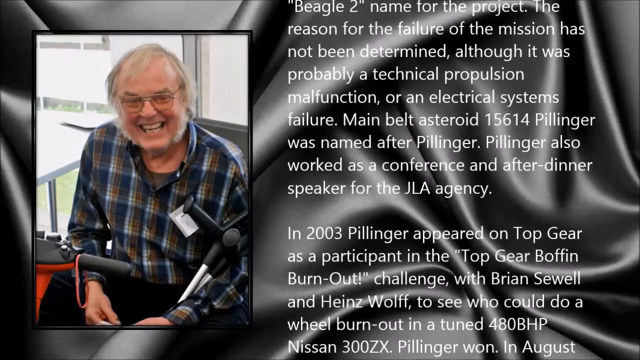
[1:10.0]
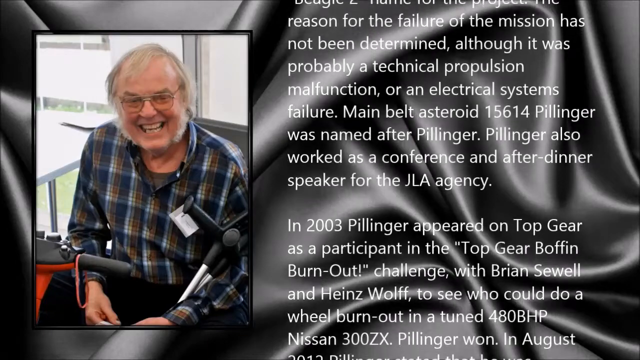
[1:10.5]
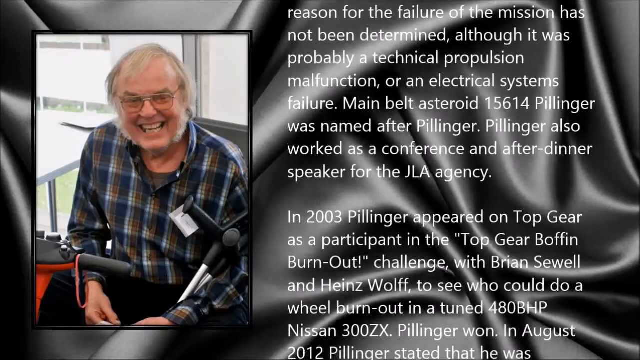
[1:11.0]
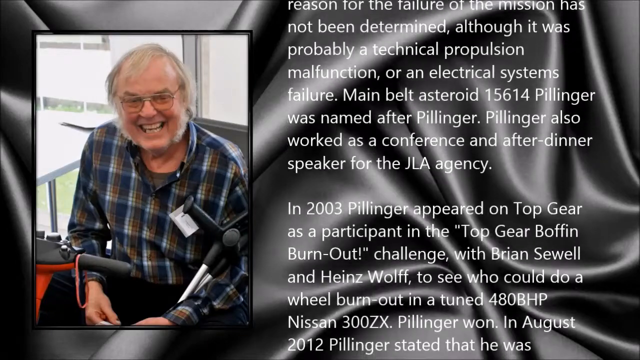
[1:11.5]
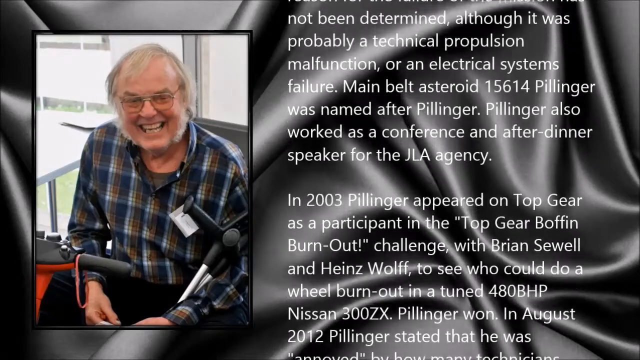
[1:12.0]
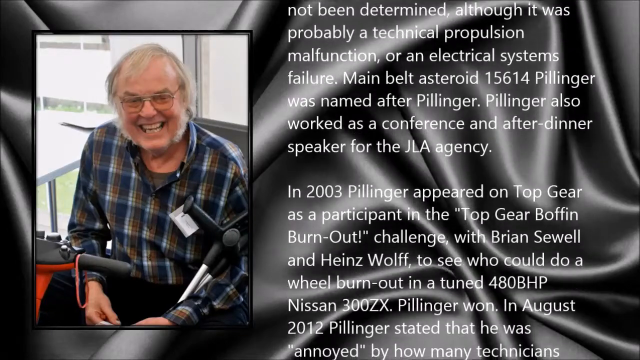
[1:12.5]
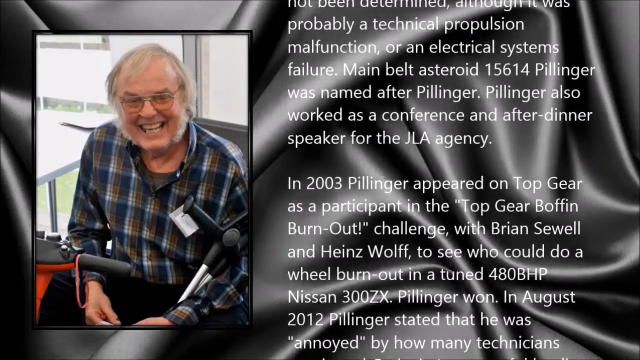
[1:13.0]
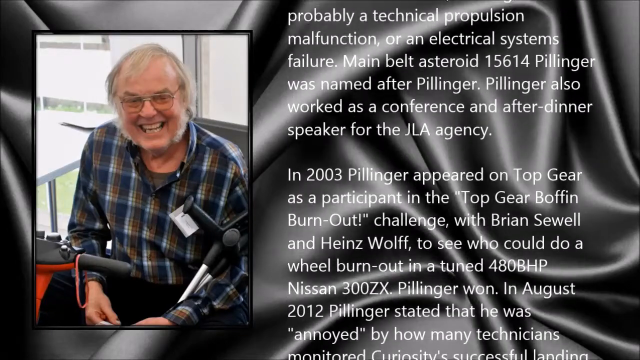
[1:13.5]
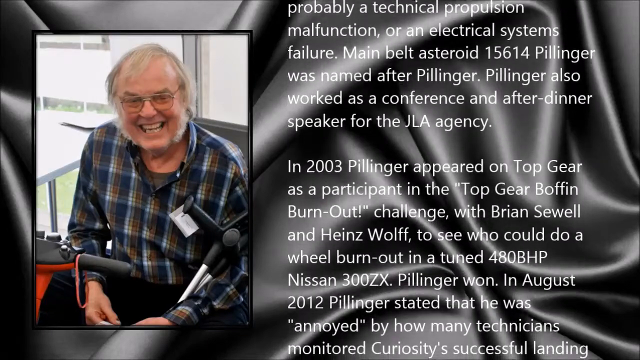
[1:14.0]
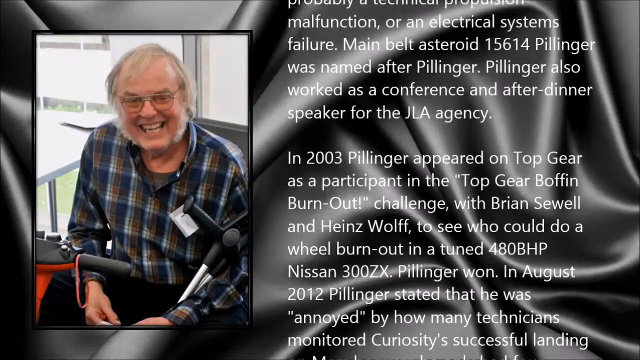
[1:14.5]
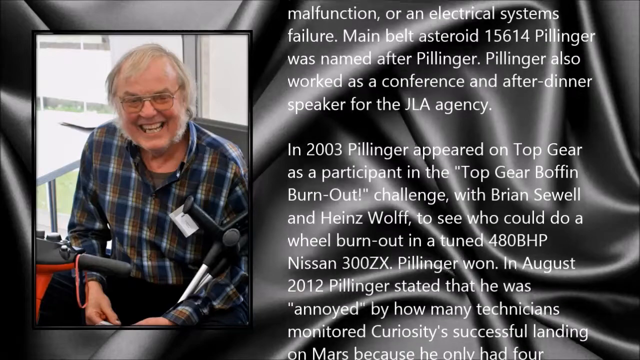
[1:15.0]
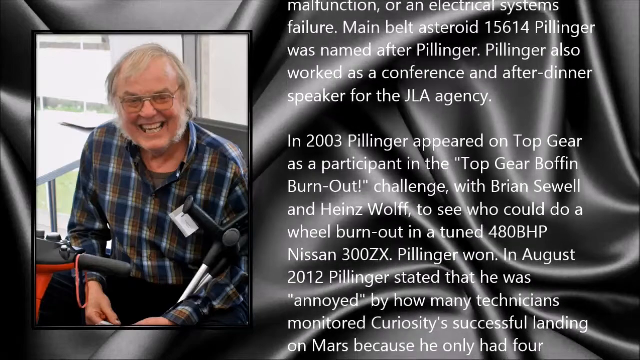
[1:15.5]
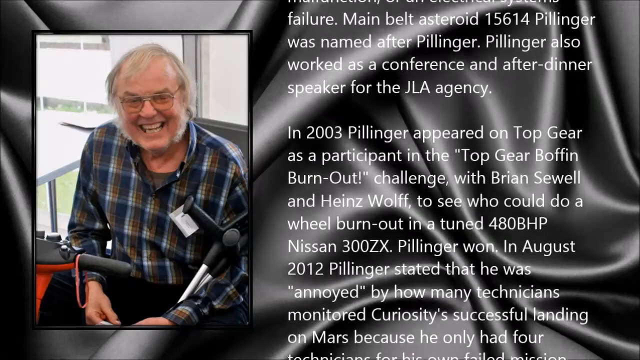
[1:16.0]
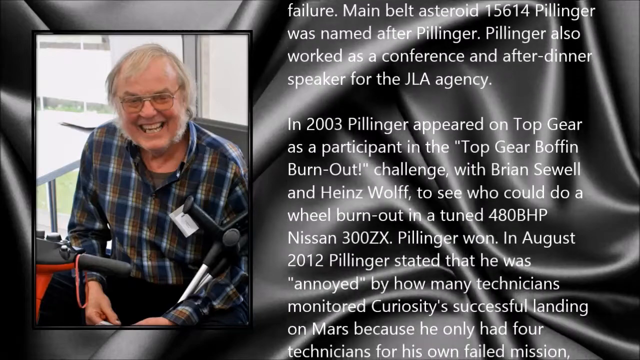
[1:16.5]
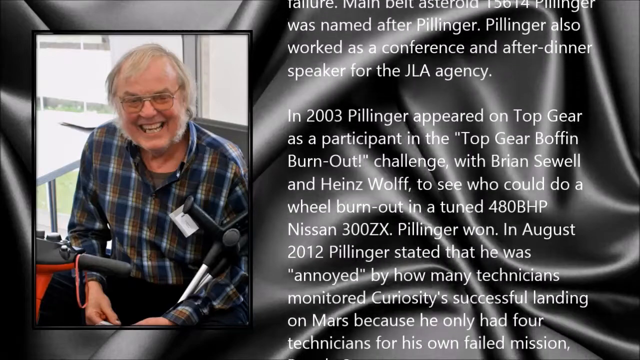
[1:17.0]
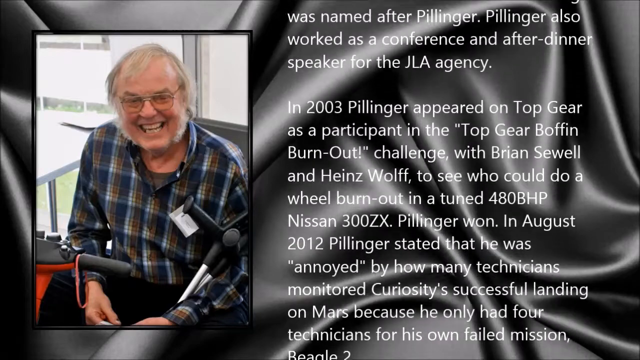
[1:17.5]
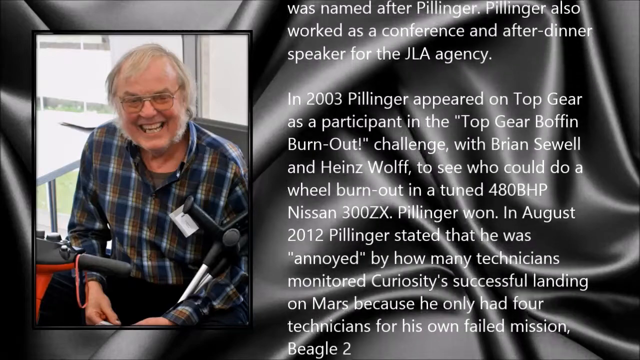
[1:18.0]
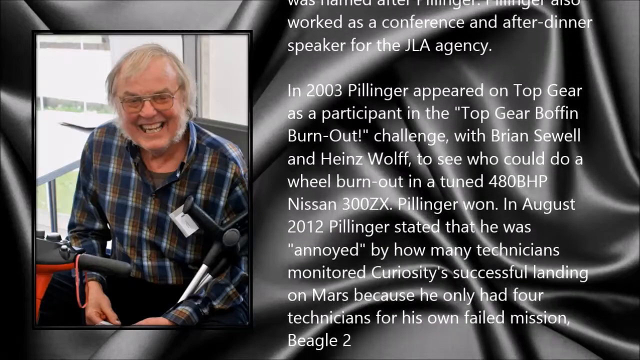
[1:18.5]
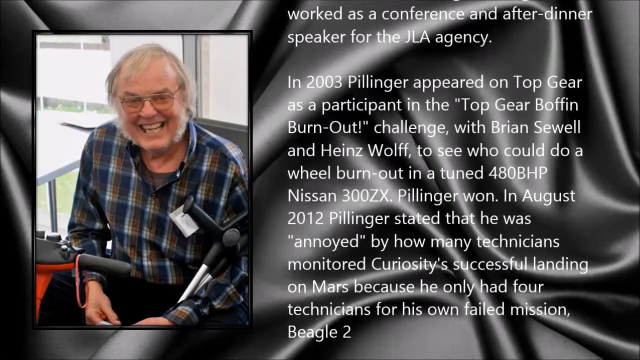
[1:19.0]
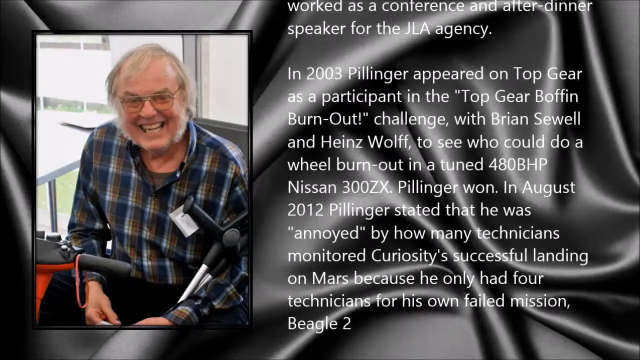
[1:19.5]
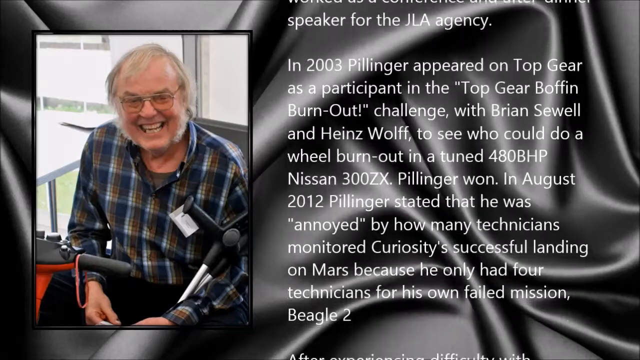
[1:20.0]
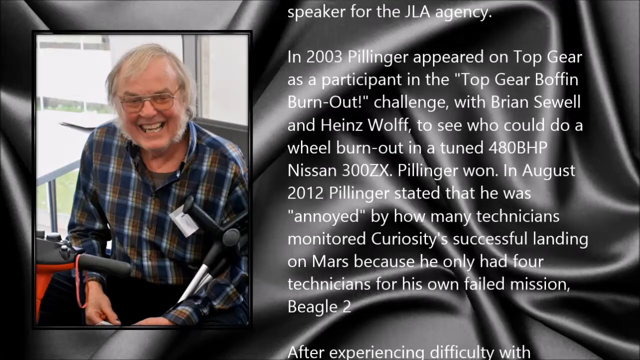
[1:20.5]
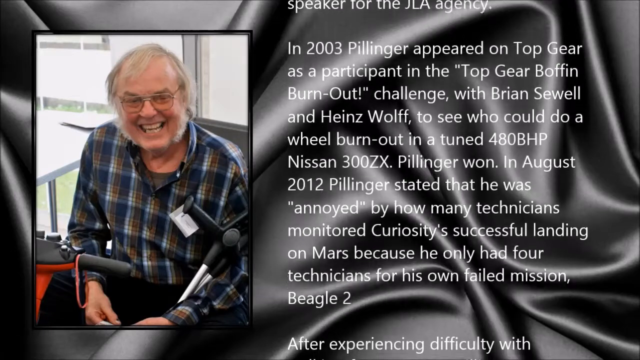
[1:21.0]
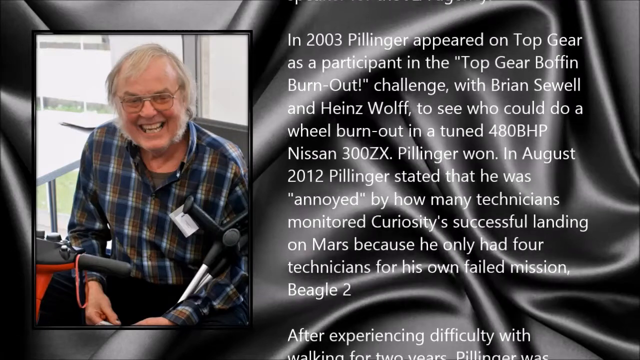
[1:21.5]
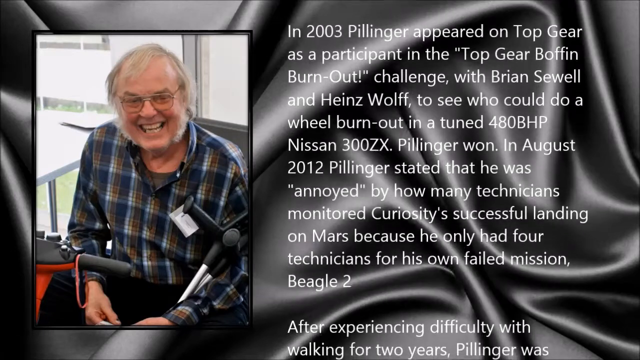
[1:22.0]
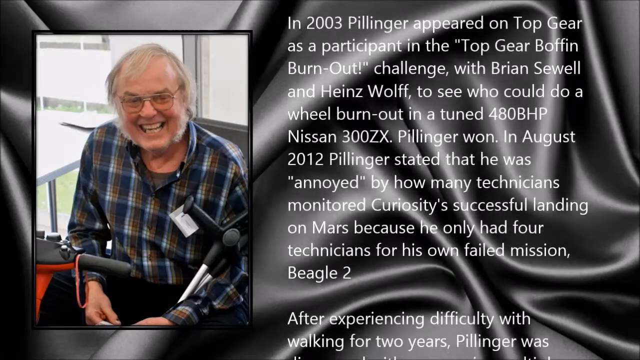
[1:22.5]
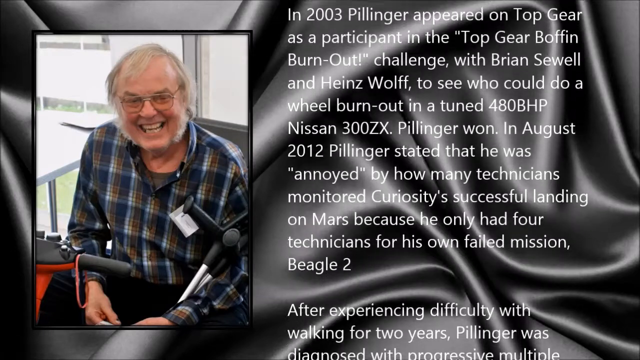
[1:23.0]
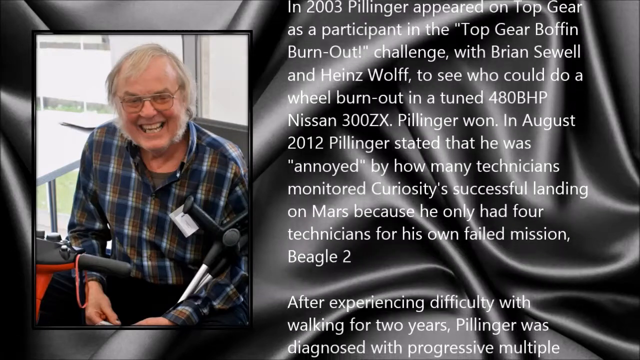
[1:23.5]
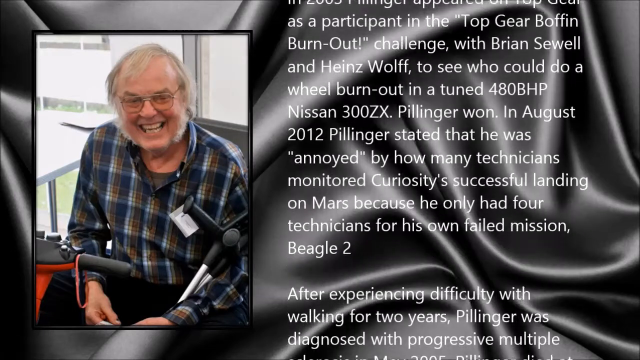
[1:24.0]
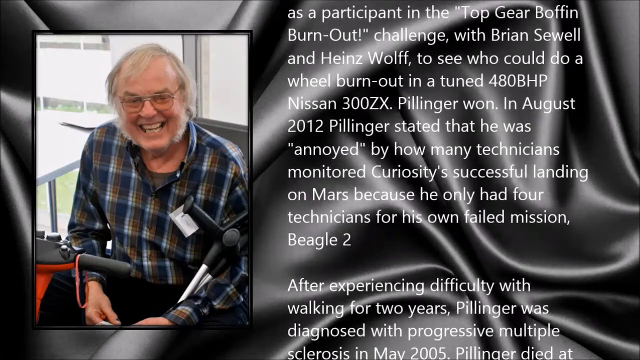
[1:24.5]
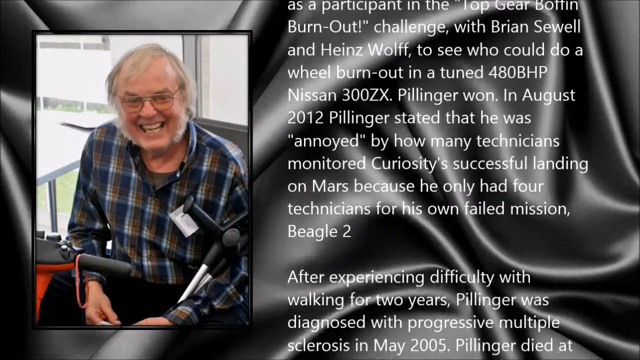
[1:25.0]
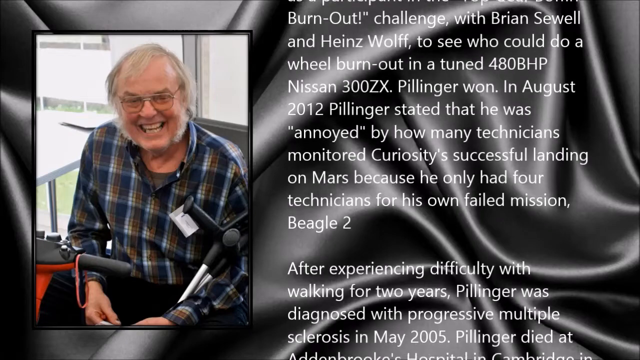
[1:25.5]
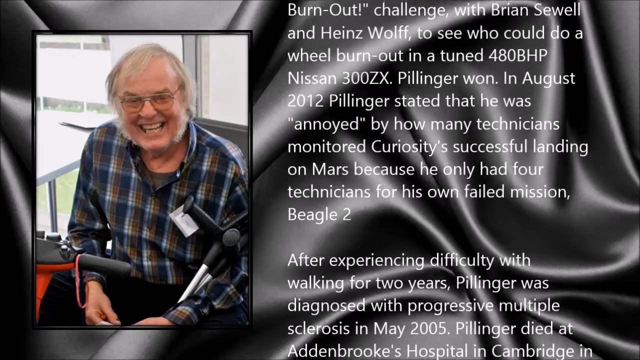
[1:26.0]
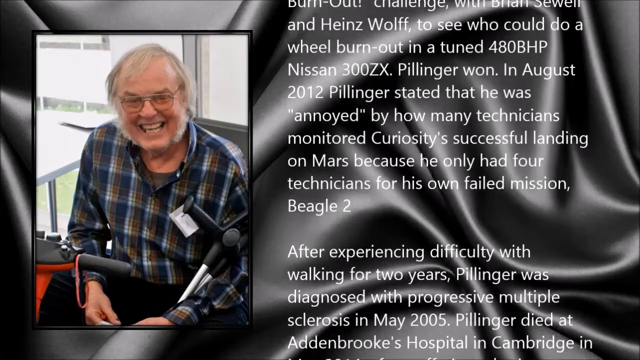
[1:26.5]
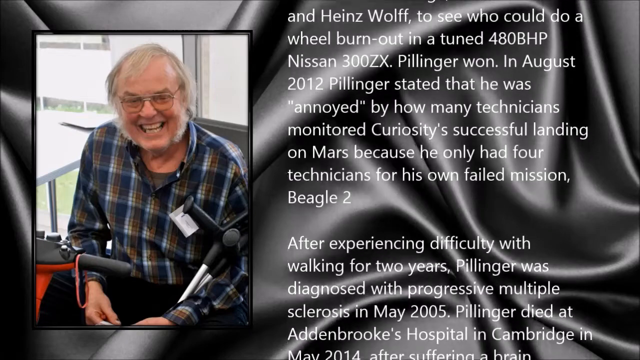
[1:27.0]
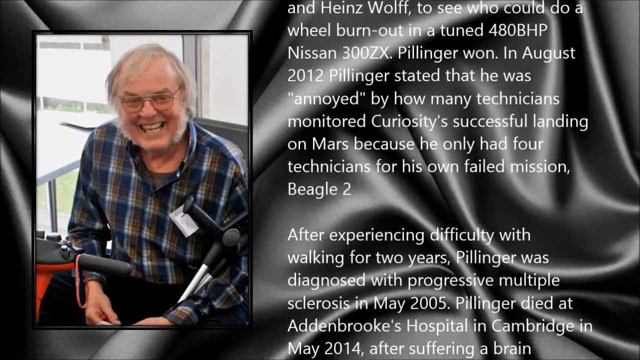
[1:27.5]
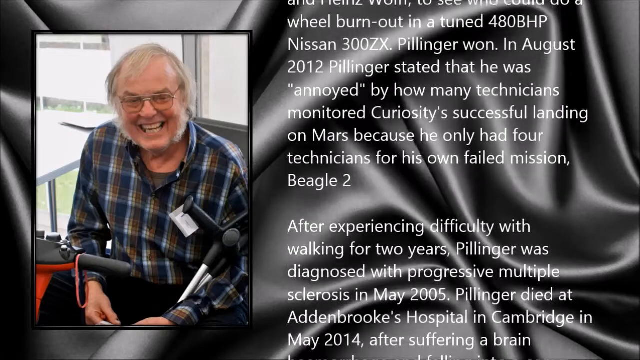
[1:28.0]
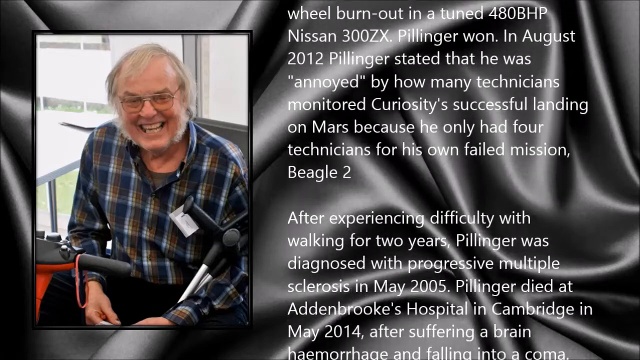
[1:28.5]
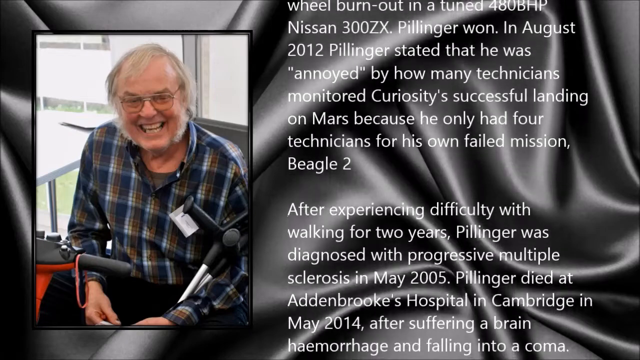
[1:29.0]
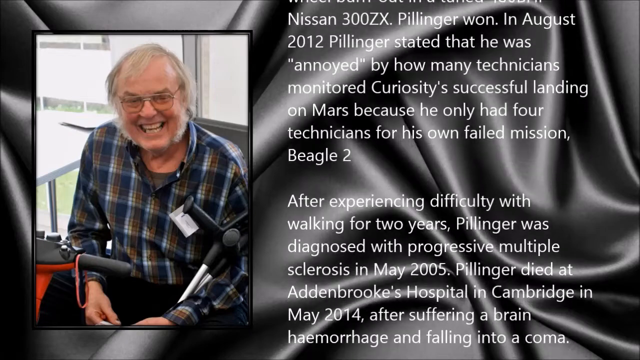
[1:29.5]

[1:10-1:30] The background is black silk, and on the left-hand side of the screen is a picture of a man smiling at the camera. He wears glasses and a checked shirt in blue, white and brown, and has grey and white hair and a beard. He appears to be sat on a mobility scooter with crutches under his arm. On the right-hand side of the screen, to the right of the image, white text scrolls upwards from the bottom, giving information about the man, Pillinger. It states that he starred in an episode of Top Gear to see who could do a wheel burnout in a Nissan 300ZX, and that Pillinger won. The text then says that in August 2012 he stated he was annoyed by how many technicians monitored Curiosity's successful landing on Mars, because he only had four technicians for his own mission, Beagle 2. As the text continues upwards, it says that after experiencing difficulty with walking for two years, he was diagnosed with progressive multiple sclerosis in May 2005.